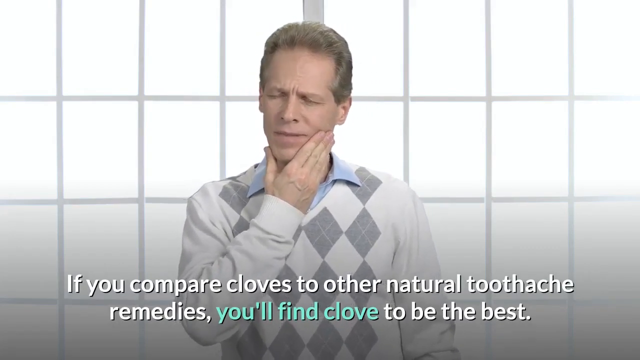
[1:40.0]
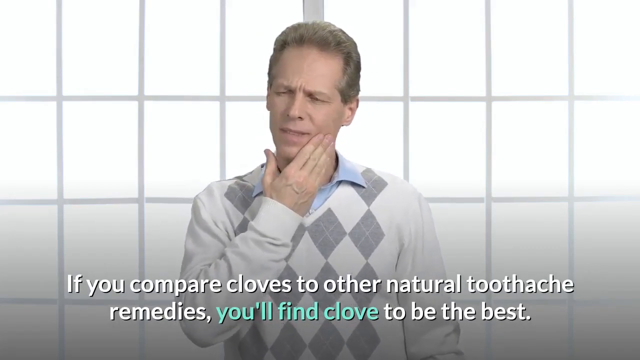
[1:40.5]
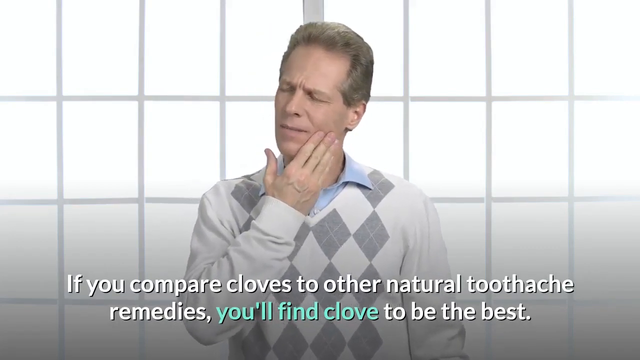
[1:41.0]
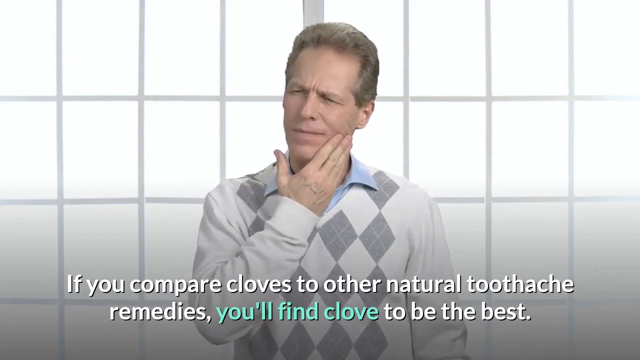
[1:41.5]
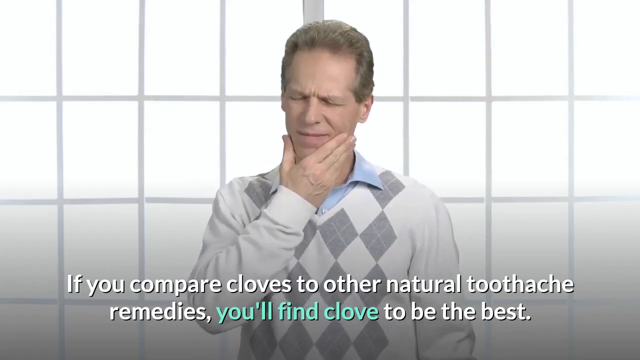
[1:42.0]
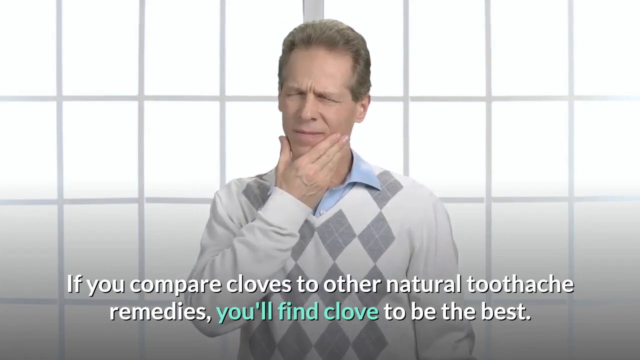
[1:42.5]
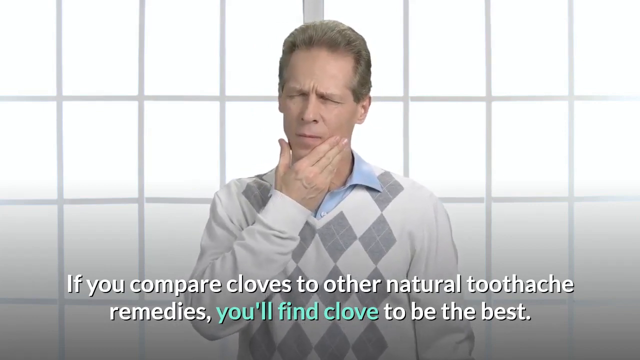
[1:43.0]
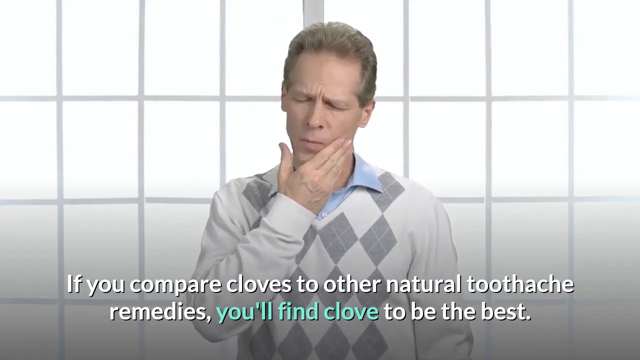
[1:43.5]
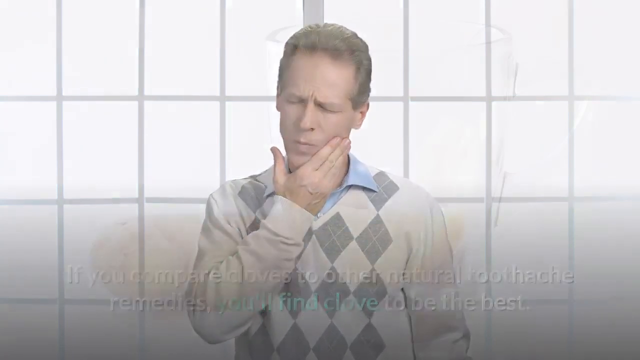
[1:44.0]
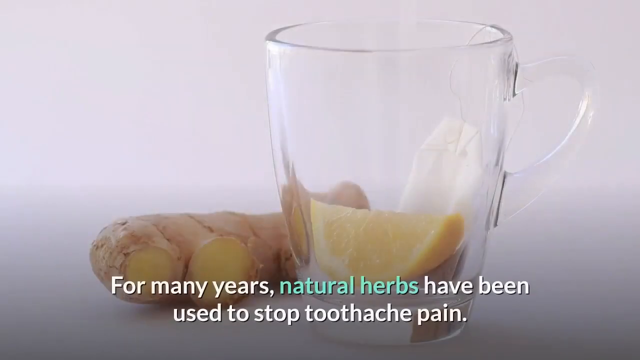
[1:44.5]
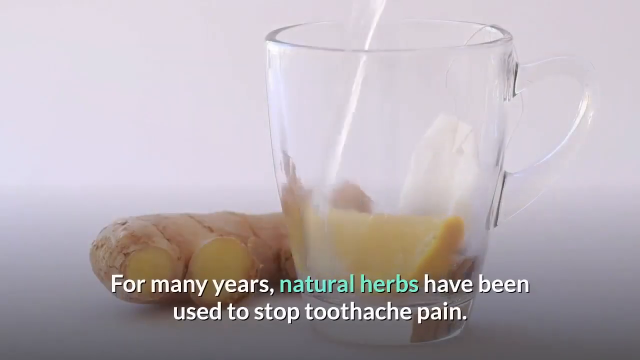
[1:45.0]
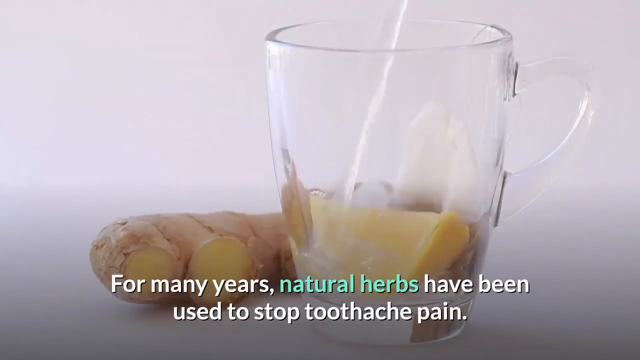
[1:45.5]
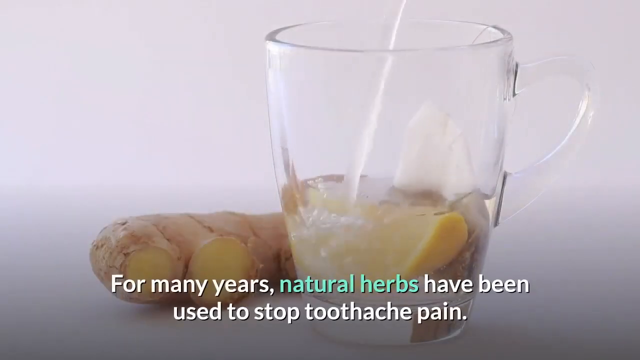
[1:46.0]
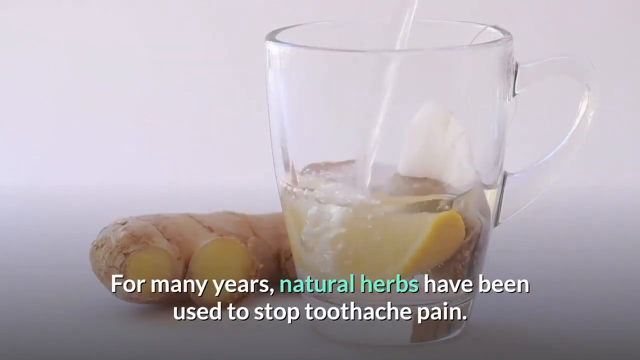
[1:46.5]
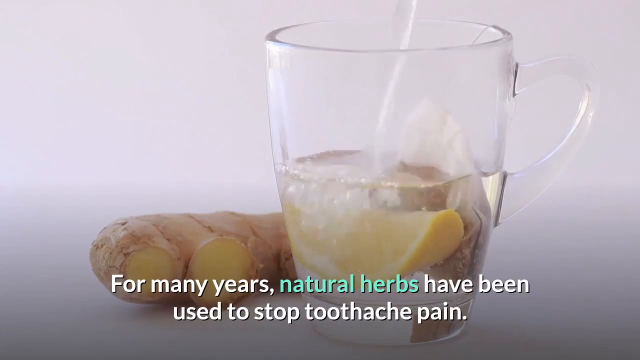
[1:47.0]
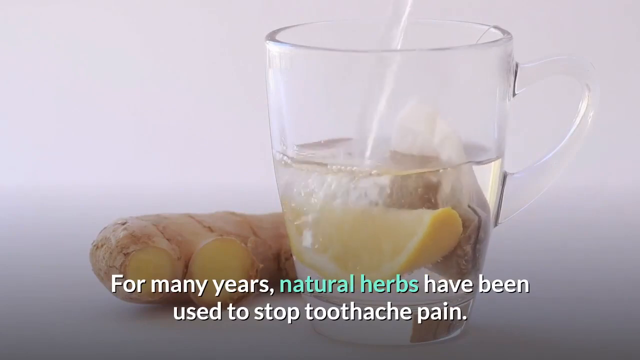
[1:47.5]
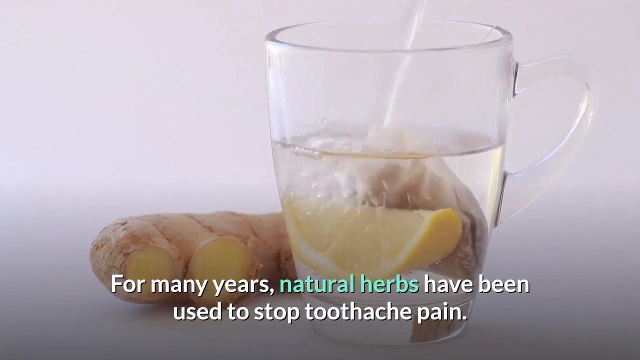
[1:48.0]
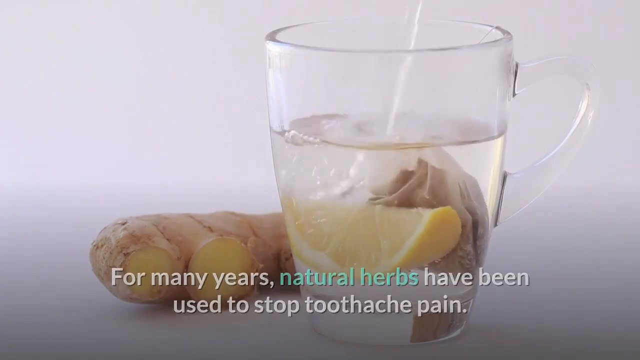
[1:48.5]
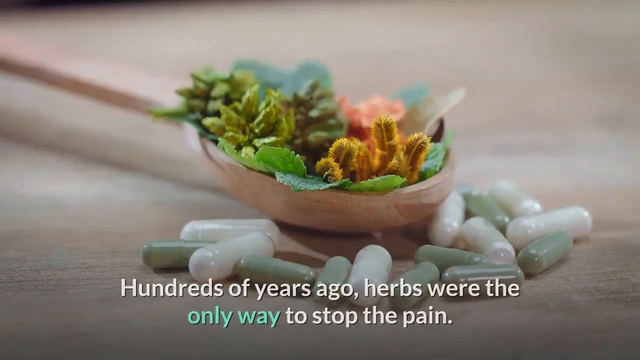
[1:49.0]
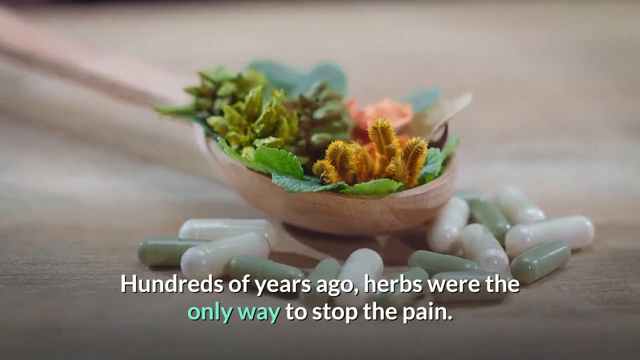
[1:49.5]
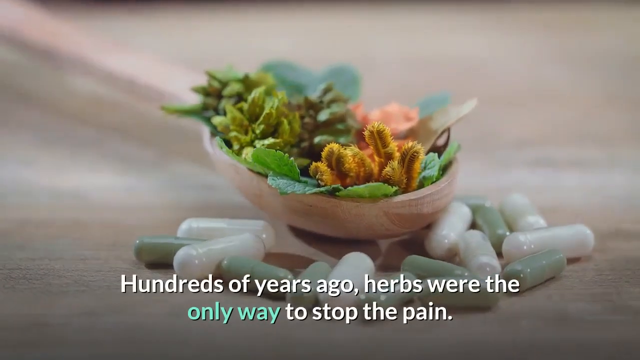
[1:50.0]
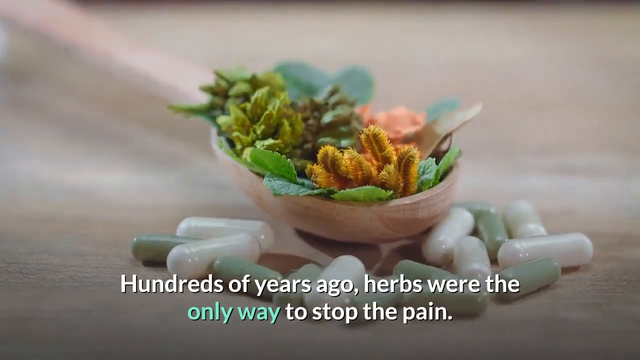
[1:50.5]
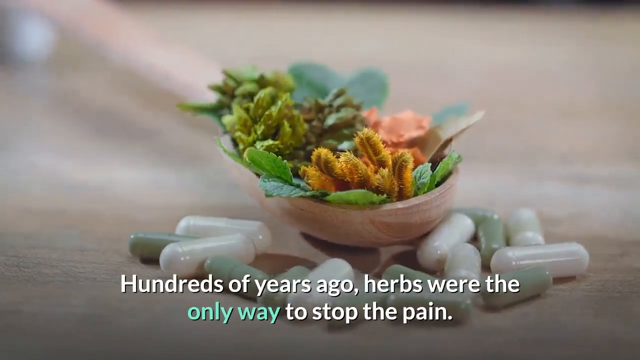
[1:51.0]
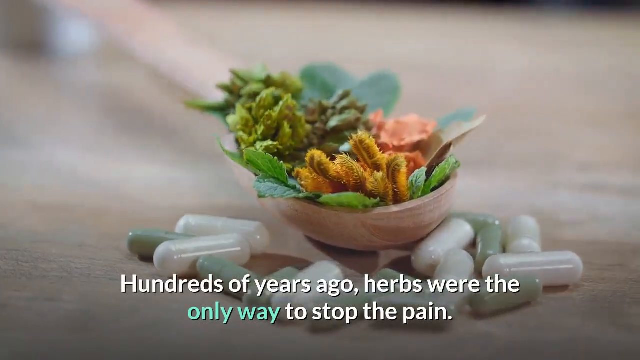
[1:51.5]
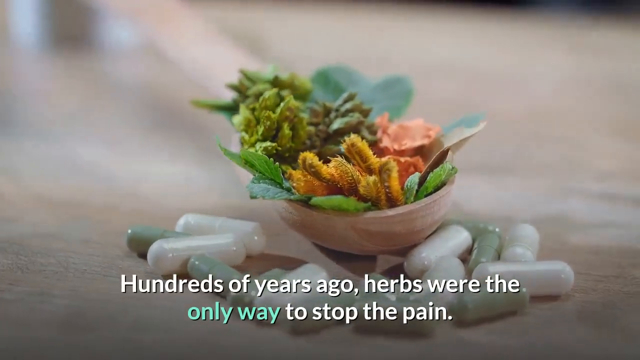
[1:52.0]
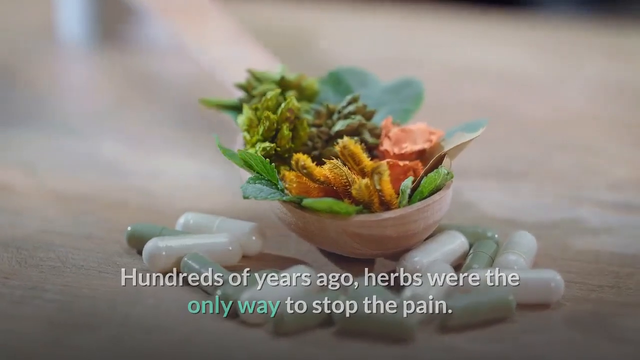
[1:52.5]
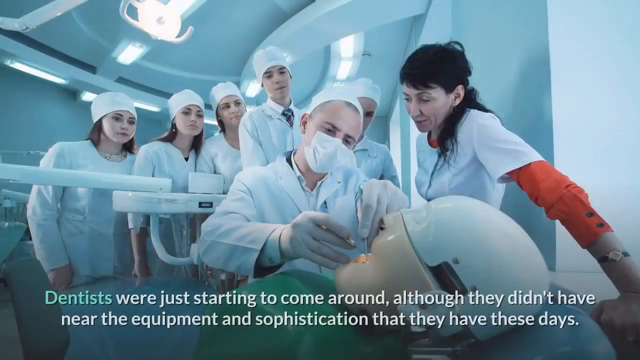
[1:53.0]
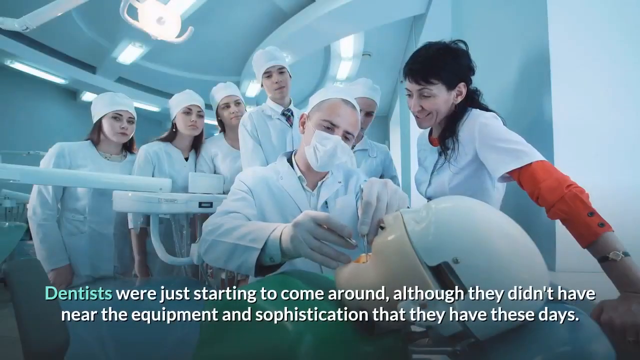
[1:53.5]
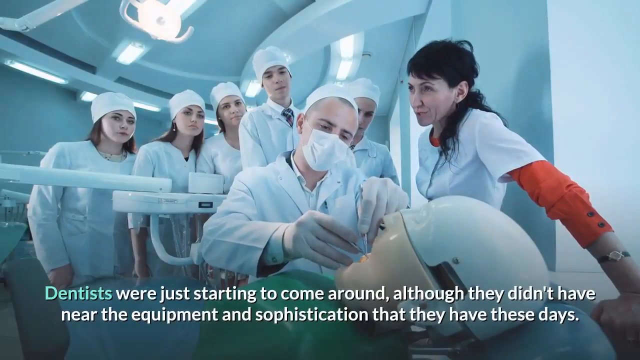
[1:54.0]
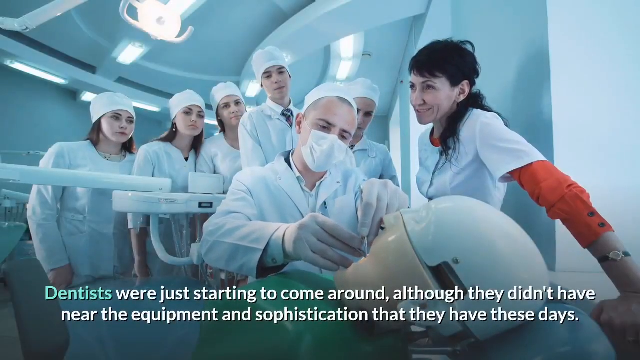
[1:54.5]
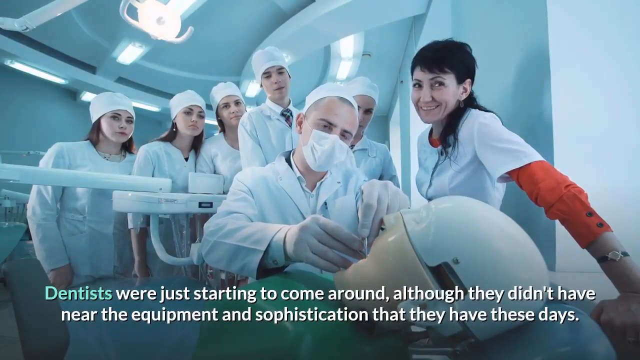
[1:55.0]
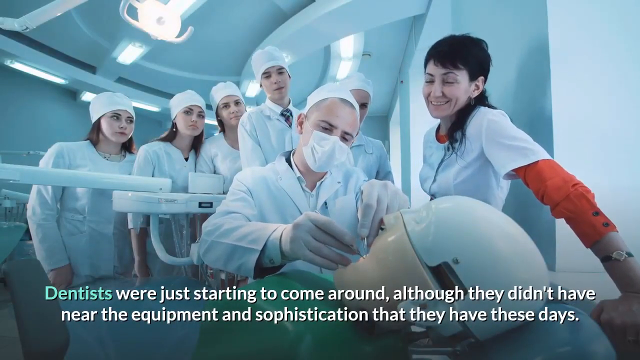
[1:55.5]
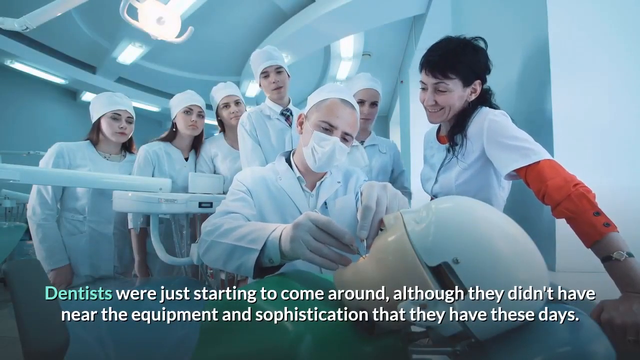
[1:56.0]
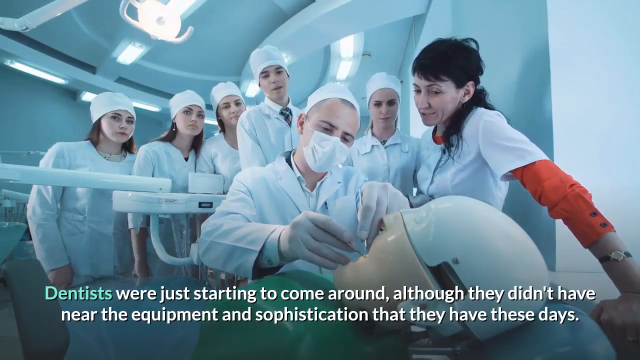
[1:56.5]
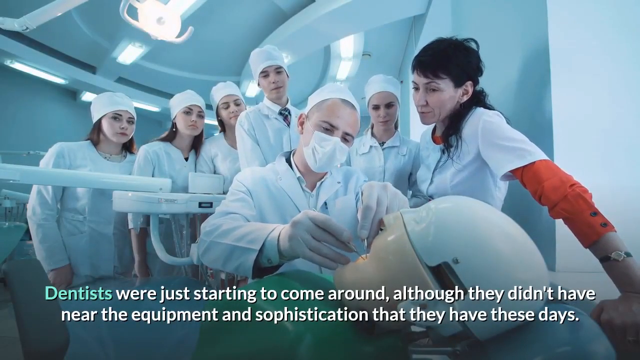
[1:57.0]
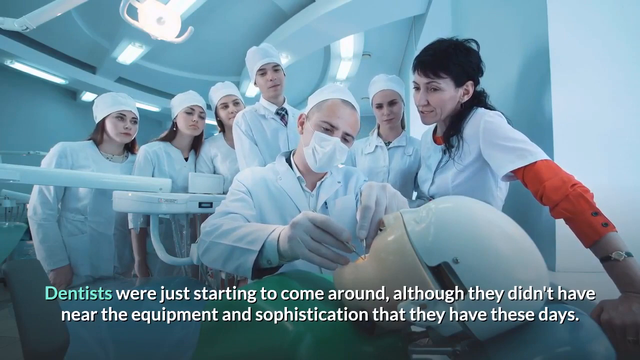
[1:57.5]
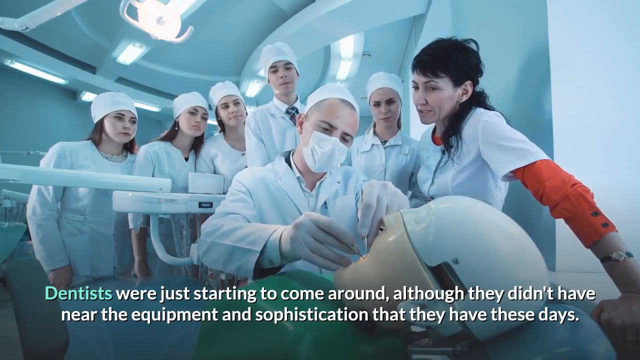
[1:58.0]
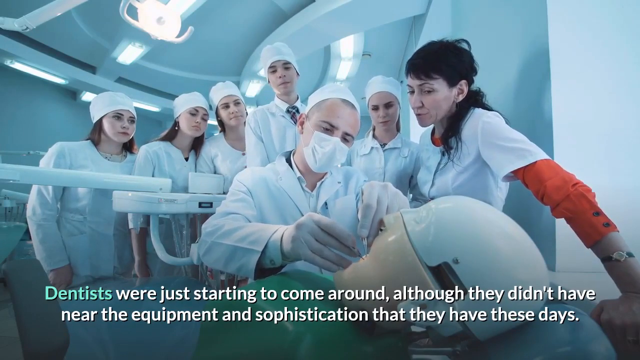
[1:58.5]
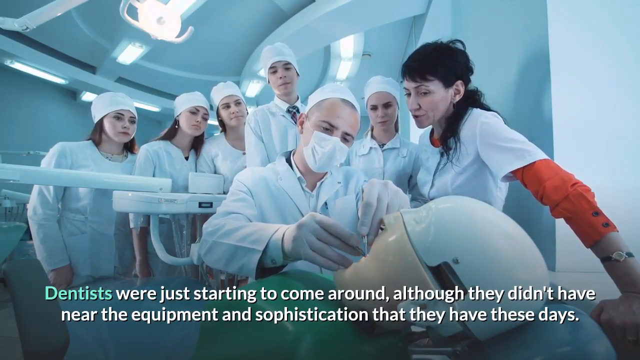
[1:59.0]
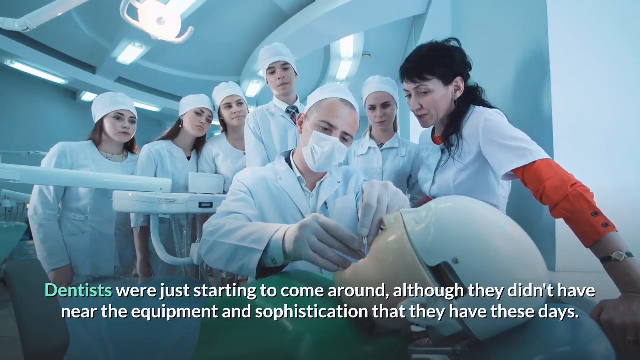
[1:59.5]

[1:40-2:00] The man in the gray and white argyle sweater over a blue collared shirt holds his jaw, his right thumb on the right side and the fingers of his right hand on the left side. His eyes are squinted in pain and he moves his mouth around. The text at the bottom reads "if you compare cloves to other natural toothache remedies, you'll find clove to be the best." The scene changes to a piece of ginger next to a clear teacup holding a lemon slice and a teabag, as a clear liquid is poured into the cup or mug. After the pouring, the scene changes to a spoon holding a variety of plants on a wooden surface, with white capsules and green capsules around it. The text reads "Hundreds of years ago, herbs were the only way to stop the pain." The image spins and changes to a practice dummy lying supine in a dental chair. A dentist wearing a medical mask has both hands in front of the dummy's mouth with instruments, while five students watch, with presumably a dental assistant on the right-hand side. The text reads "dentists were just starting to come around, although they didn't have near the equipment and sophistication that they have these days."